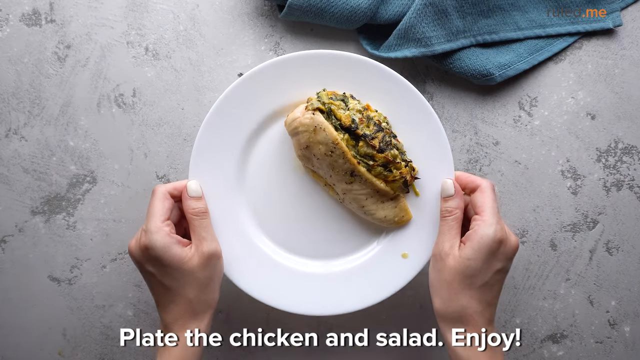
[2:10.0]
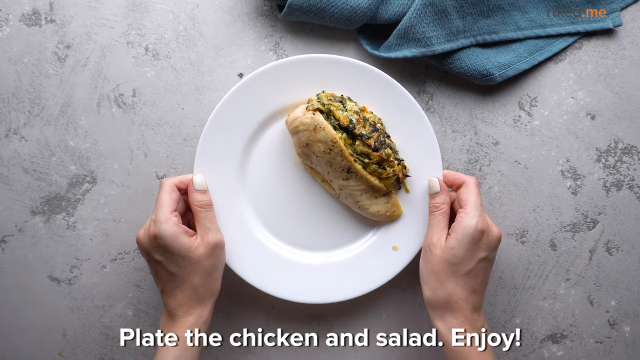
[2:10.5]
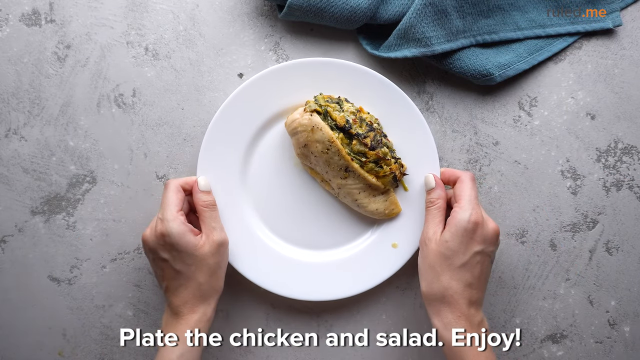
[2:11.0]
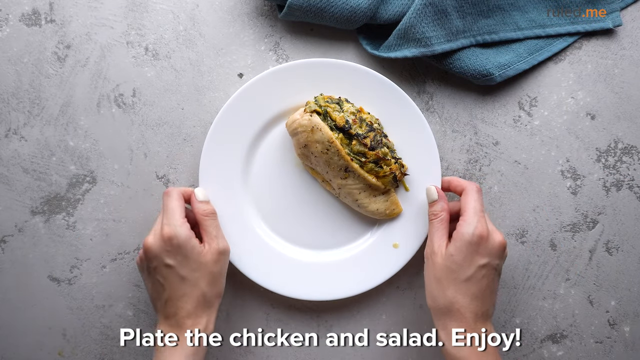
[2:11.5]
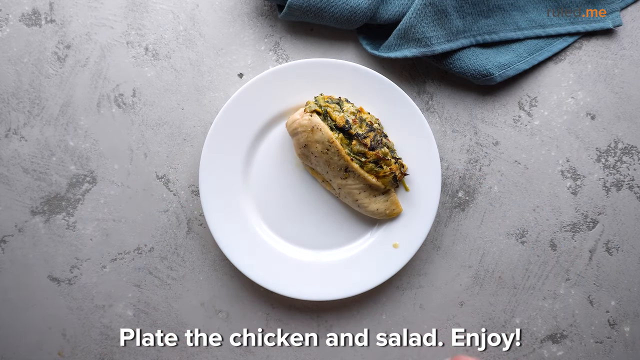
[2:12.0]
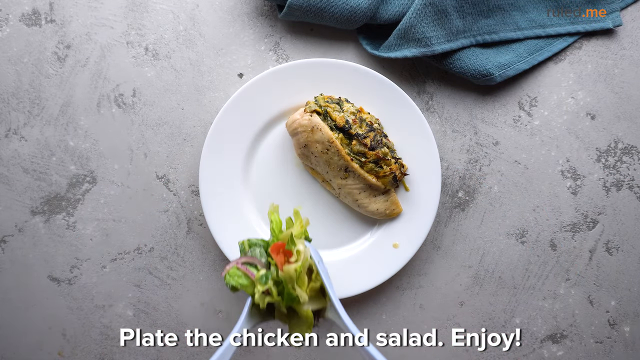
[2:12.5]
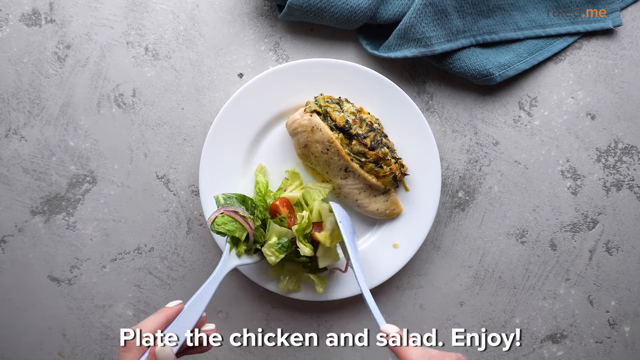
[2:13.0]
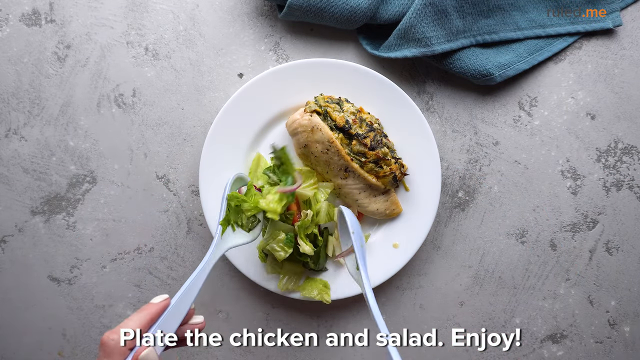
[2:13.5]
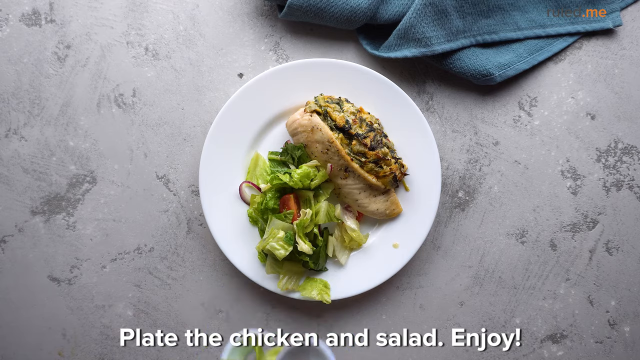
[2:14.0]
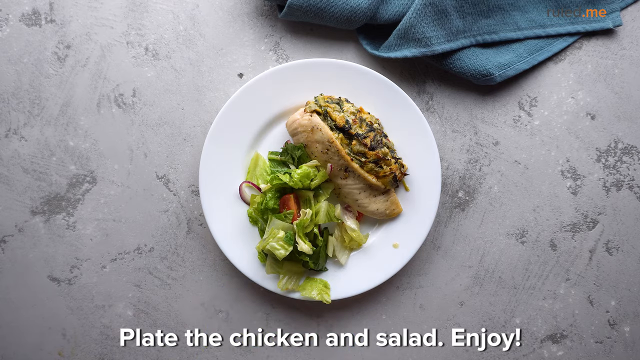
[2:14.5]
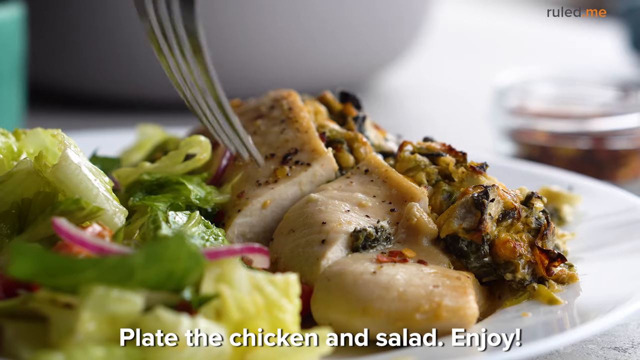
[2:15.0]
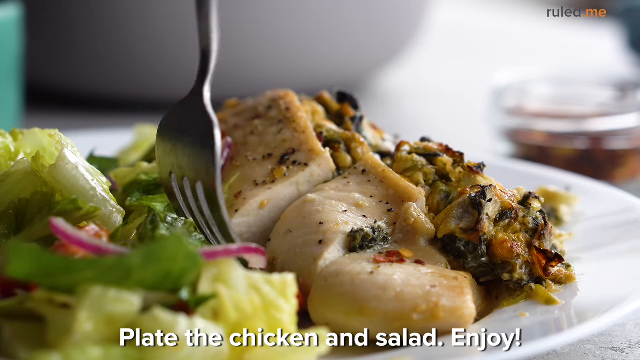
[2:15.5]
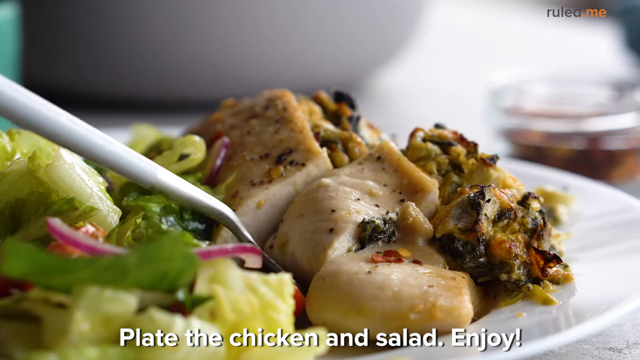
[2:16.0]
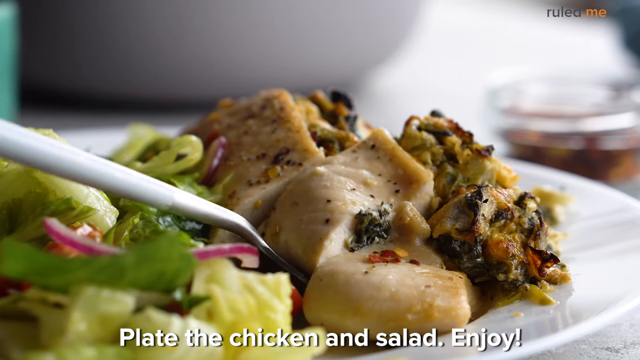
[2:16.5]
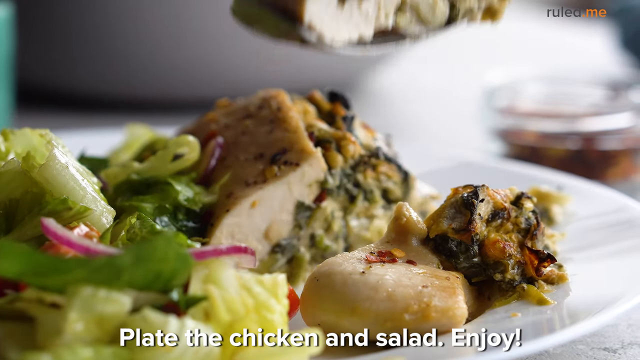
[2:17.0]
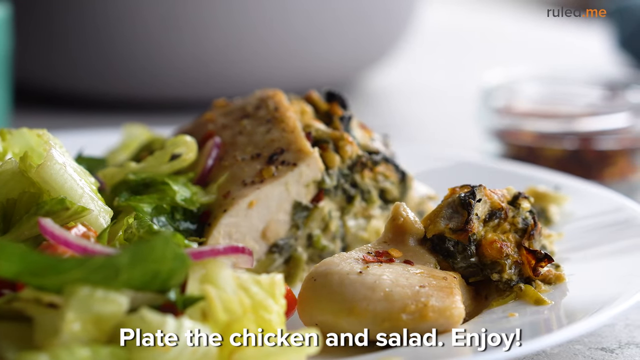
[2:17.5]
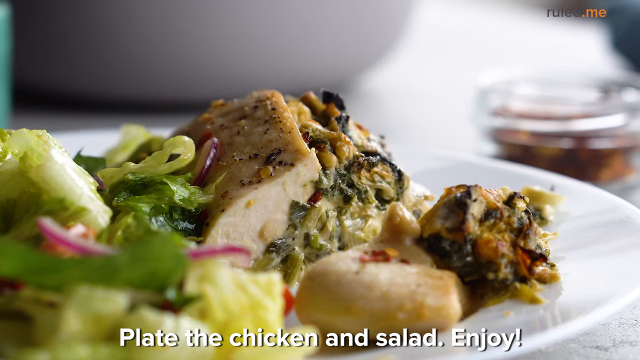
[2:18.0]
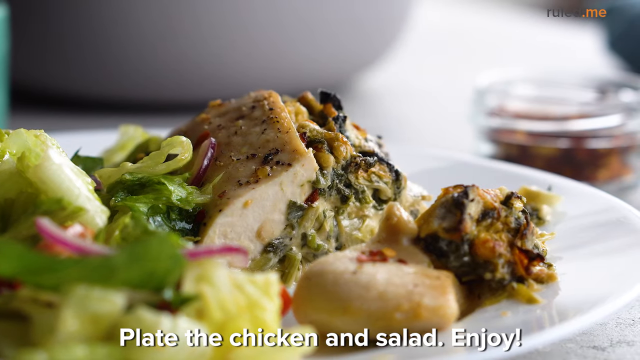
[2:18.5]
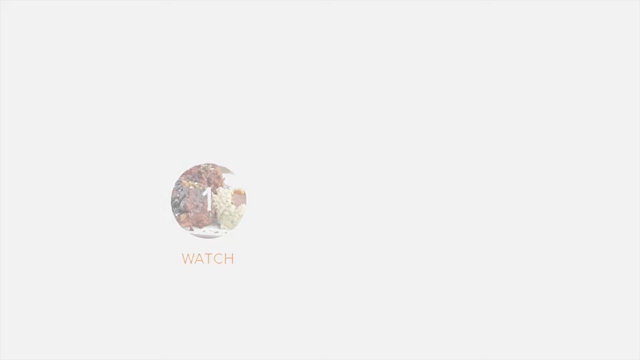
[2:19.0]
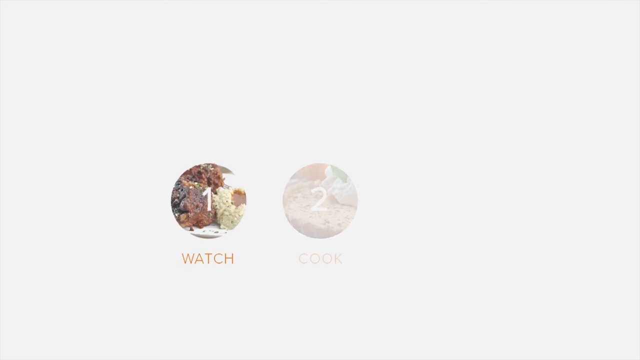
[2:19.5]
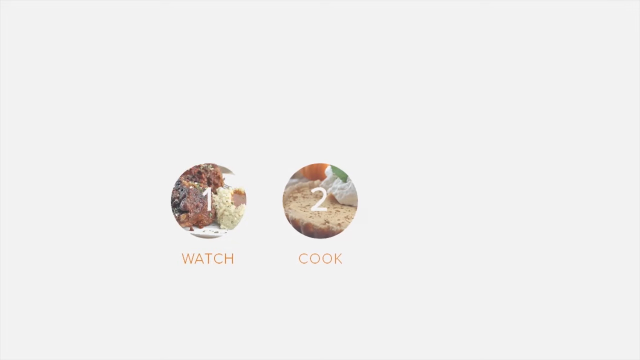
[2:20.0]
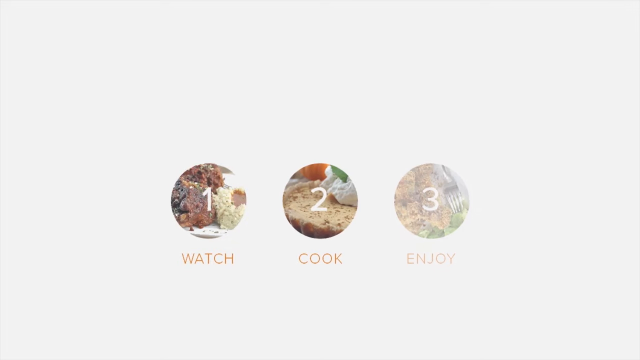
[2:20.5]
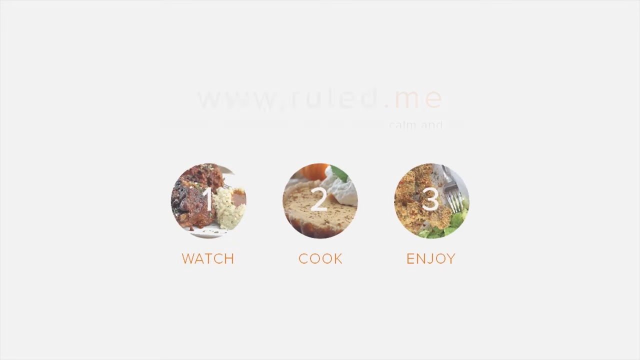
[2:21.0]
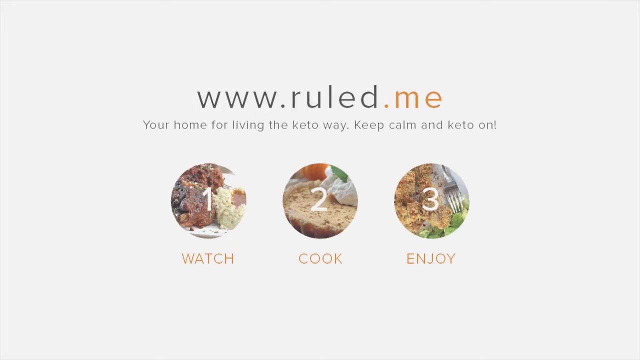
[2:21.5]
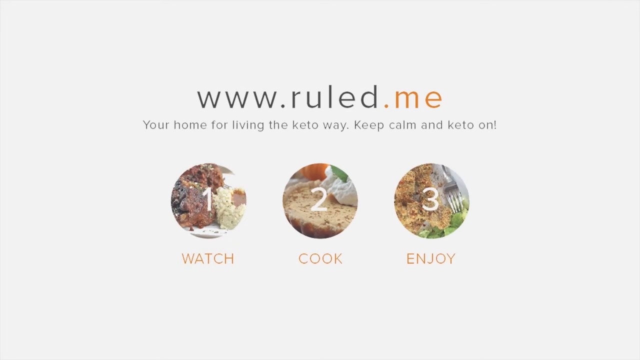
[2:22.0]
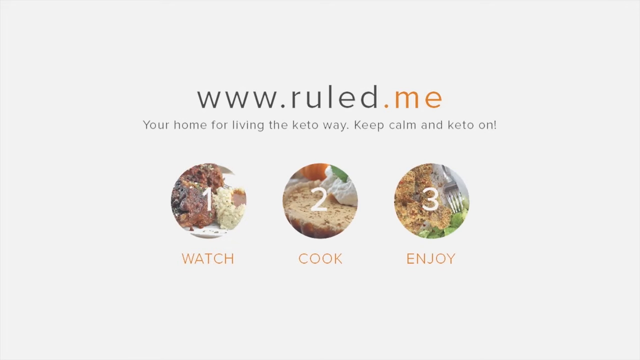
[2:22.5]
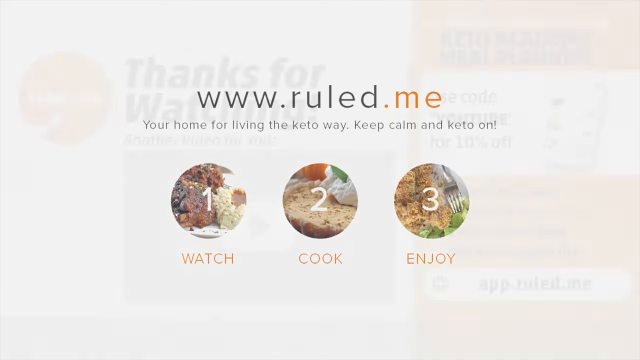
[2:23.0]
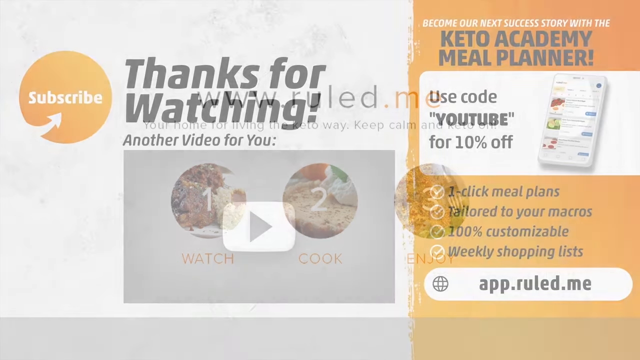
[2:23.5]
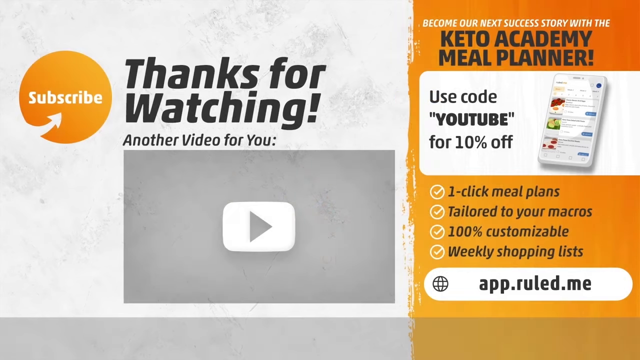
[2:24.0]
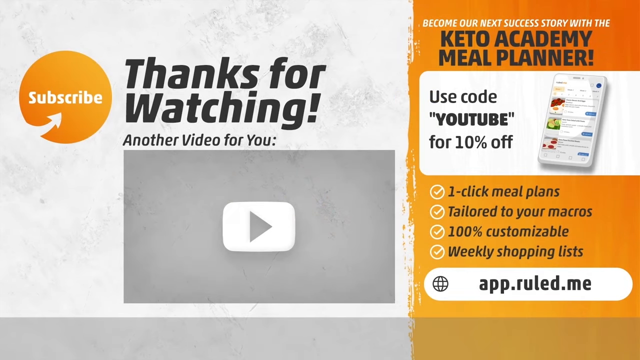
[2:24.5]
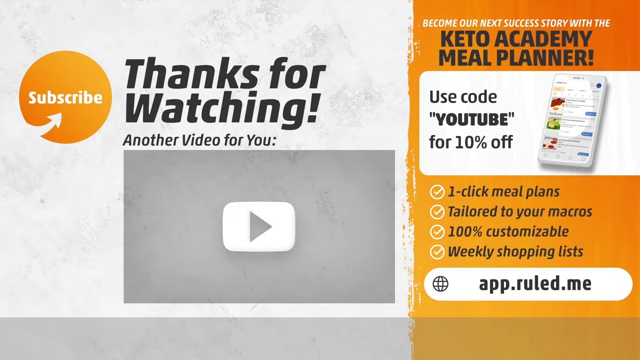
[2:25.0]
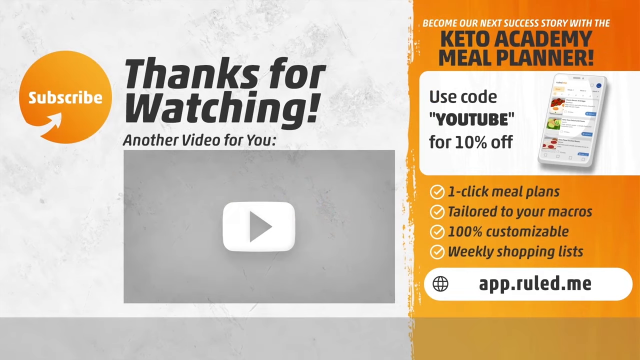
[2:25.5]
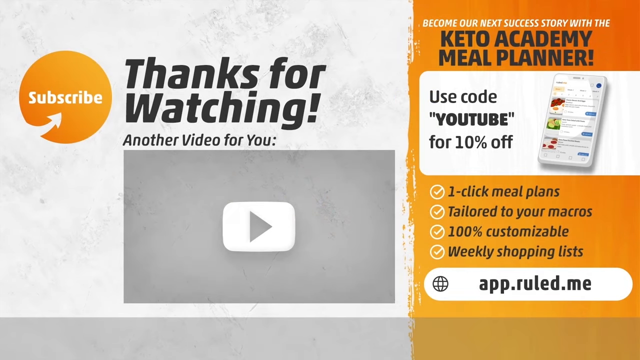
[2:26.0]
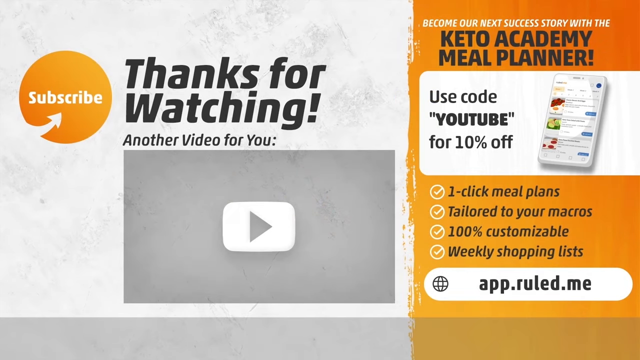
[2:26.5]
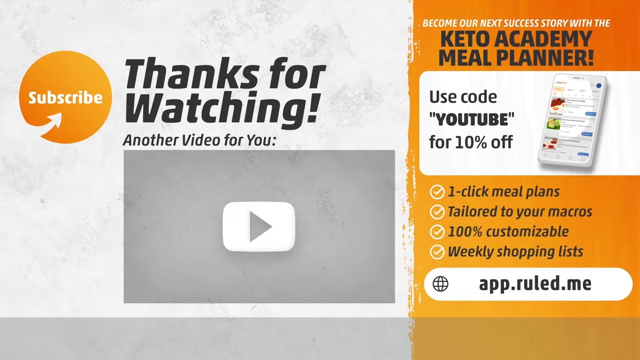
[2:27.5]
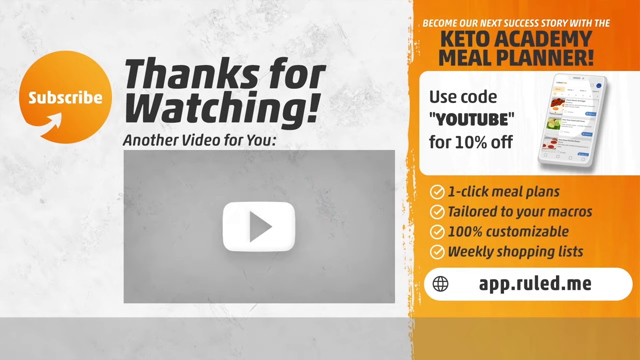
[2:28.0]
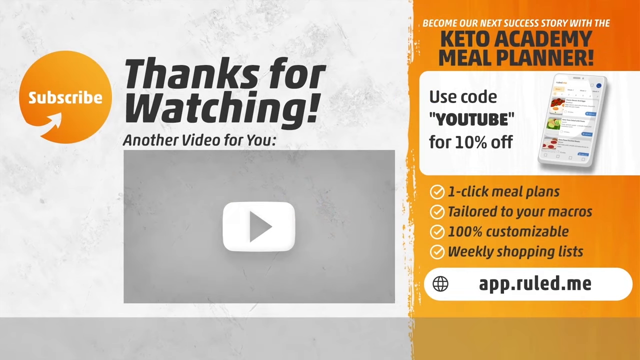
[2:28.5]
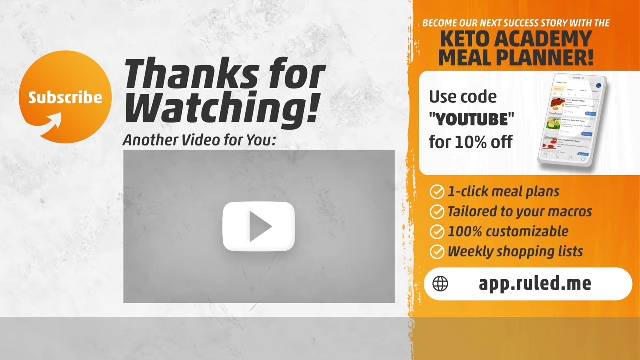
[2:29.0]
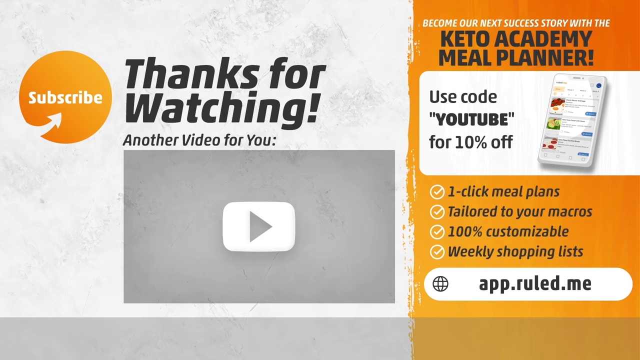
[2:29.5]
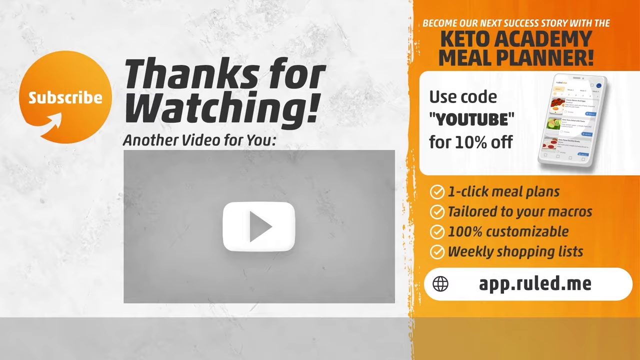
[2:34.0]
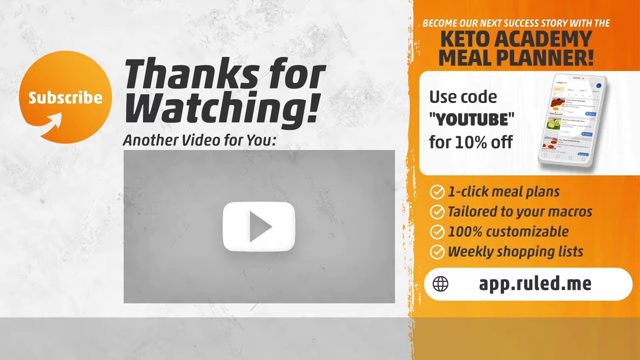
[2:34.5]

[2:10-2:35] A white plate holds a stuffed chicken breast, and a person dumps some salad next to it and takes a bite of the chicken. A close-up shows the dish. A website appears on the screen, along with a page that says "subscribe," "Thanks for watching" and "Another video for you," with a clickable arrow; the screen also names the dish. Text reads "one, two, three, watch, cook, eat," then "Keto Academy Meal Planner," mentions a YouTube code for 10% off, and describes "one-click meal plans," apparently tailored to be healthy. The plate with the chicken and the salad beside it is shown, and the screen points to a keto meal plan available on the website and thanks the viewer for watching.